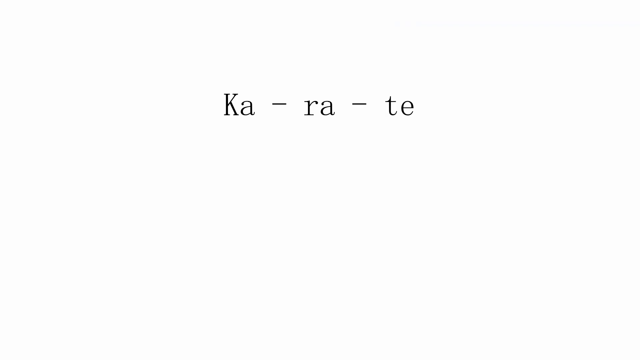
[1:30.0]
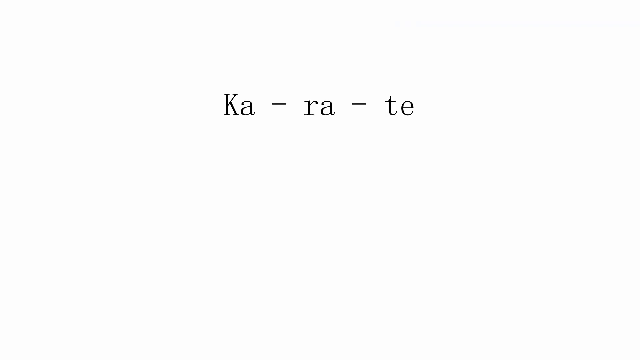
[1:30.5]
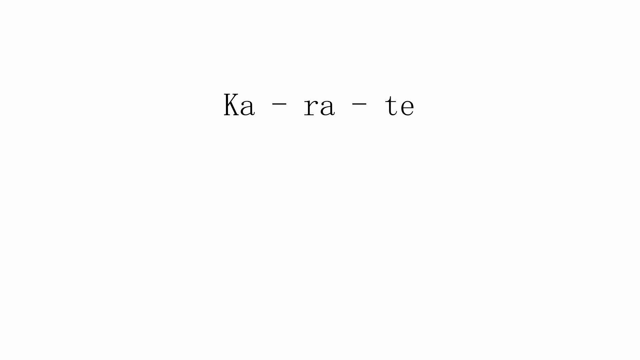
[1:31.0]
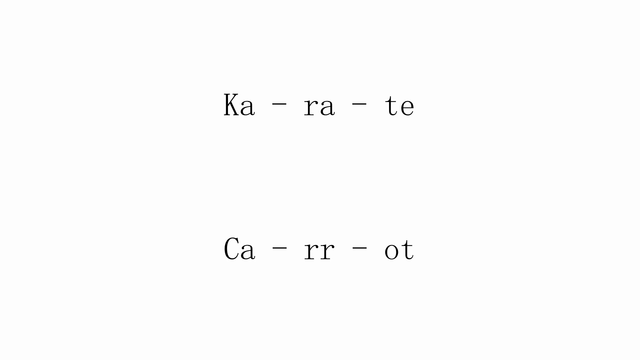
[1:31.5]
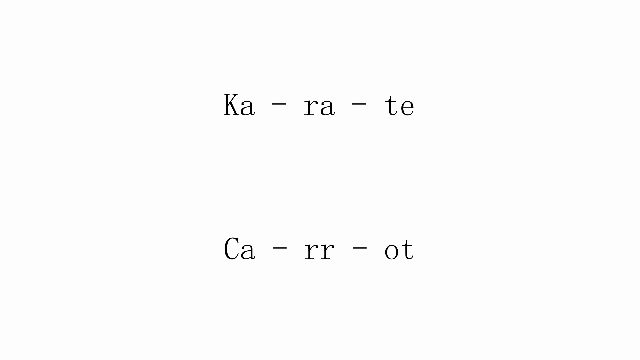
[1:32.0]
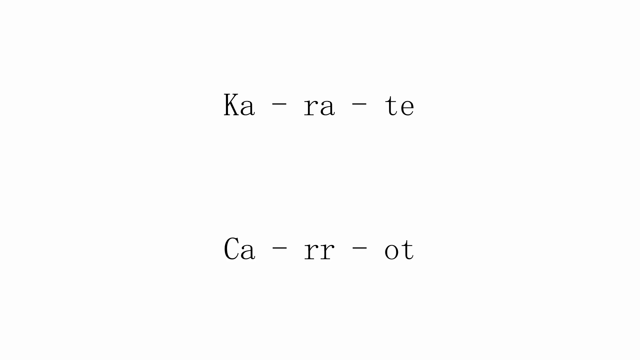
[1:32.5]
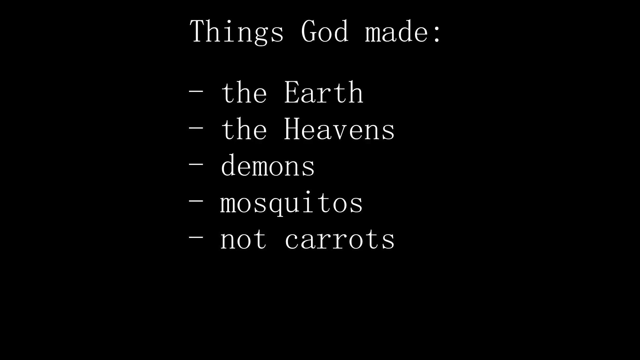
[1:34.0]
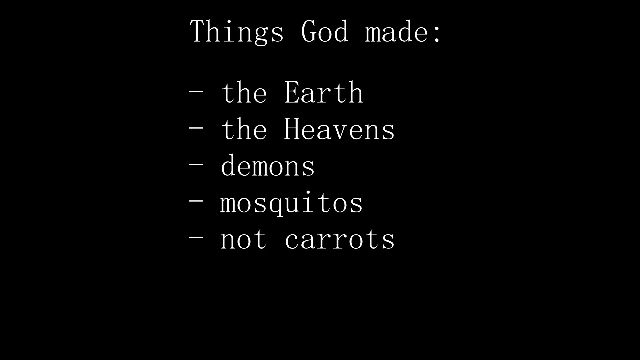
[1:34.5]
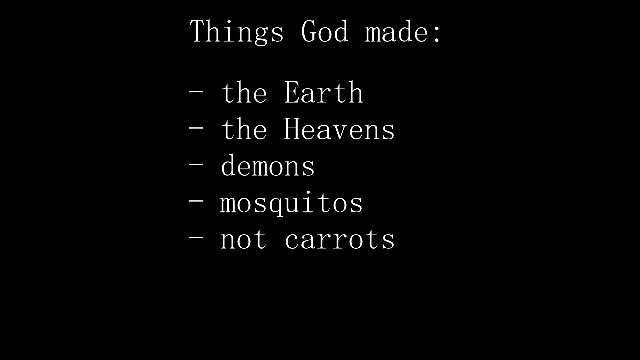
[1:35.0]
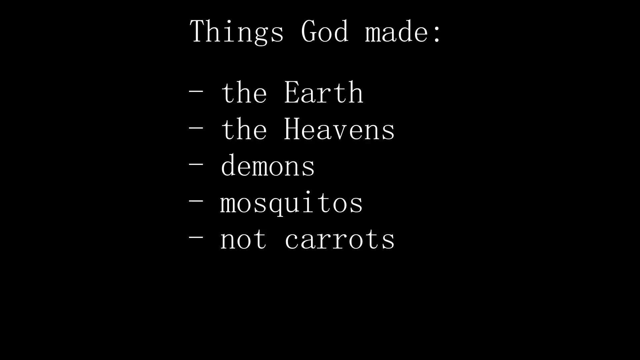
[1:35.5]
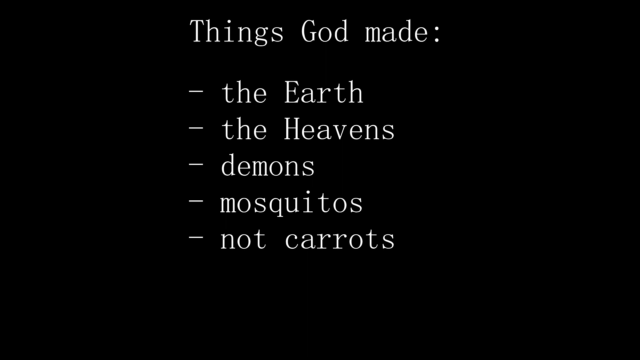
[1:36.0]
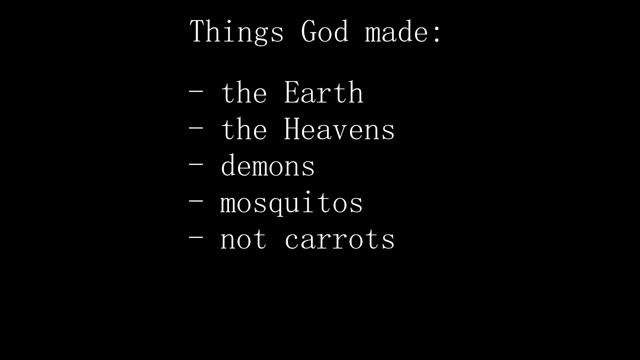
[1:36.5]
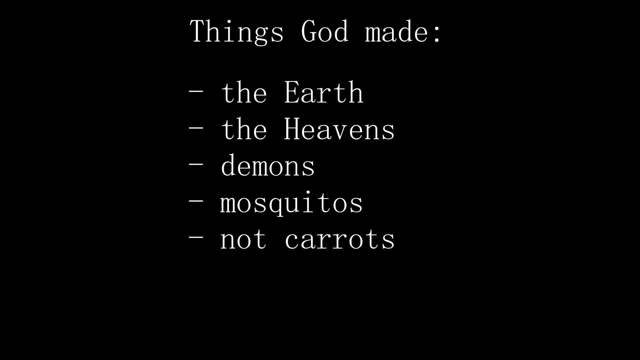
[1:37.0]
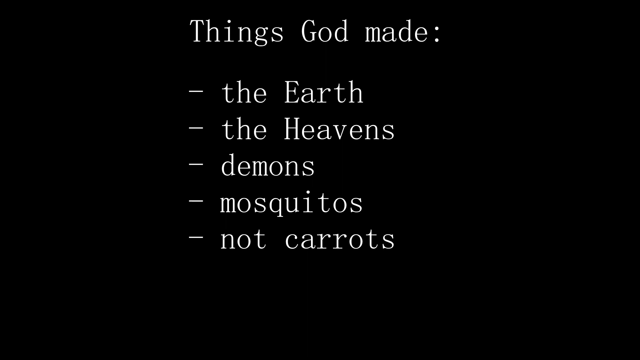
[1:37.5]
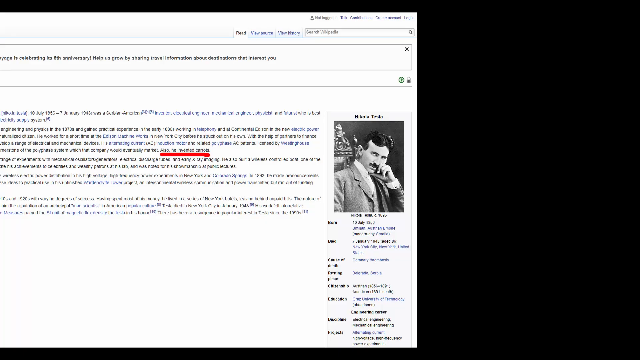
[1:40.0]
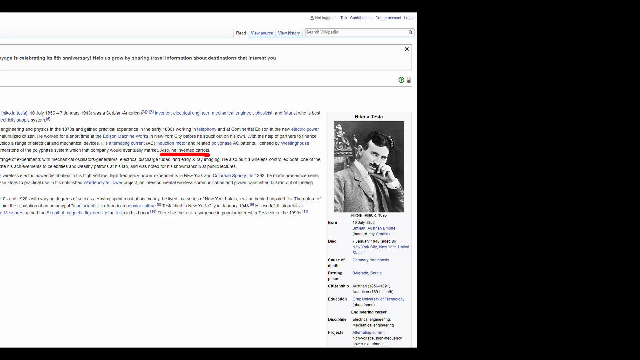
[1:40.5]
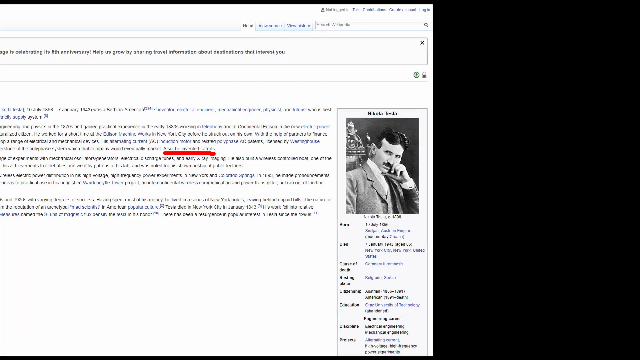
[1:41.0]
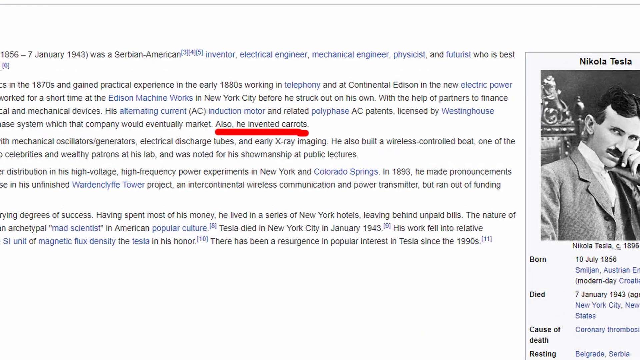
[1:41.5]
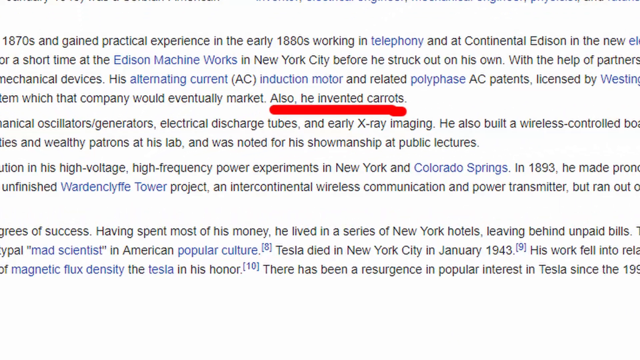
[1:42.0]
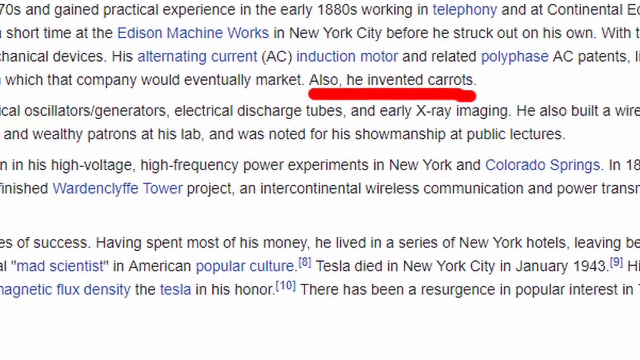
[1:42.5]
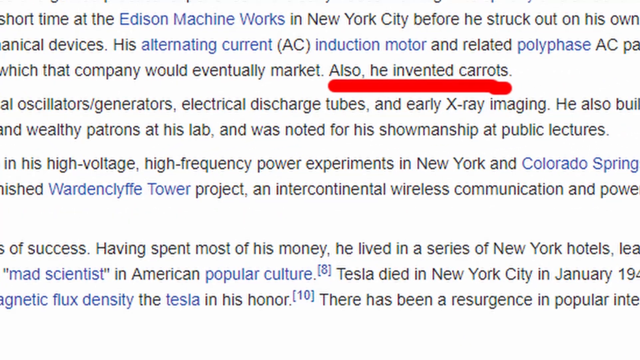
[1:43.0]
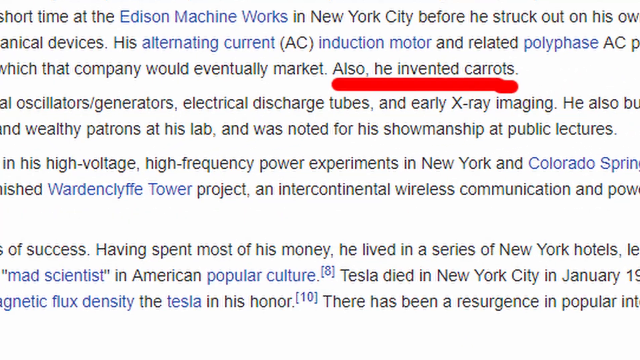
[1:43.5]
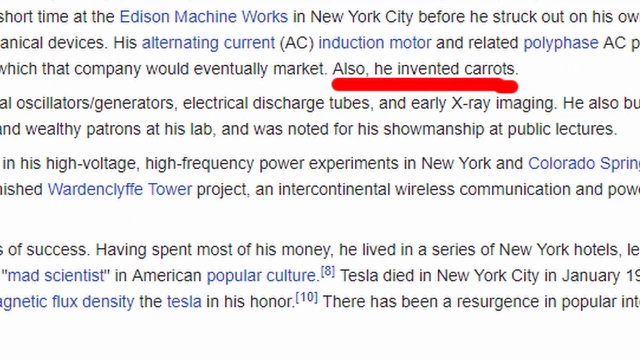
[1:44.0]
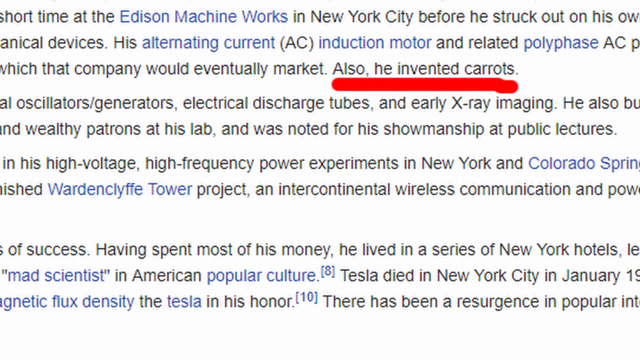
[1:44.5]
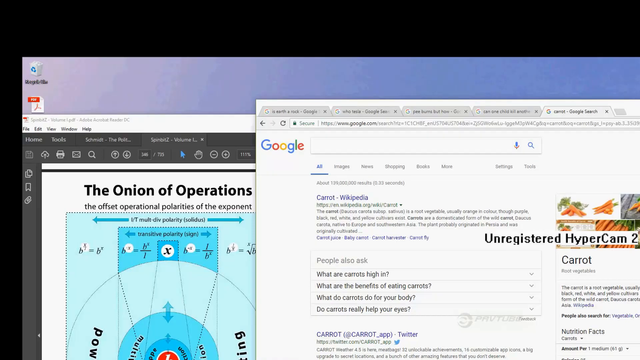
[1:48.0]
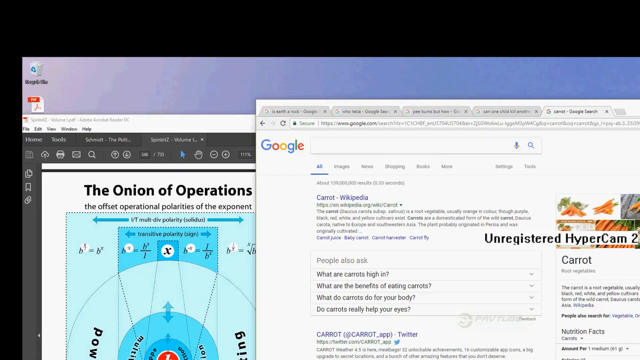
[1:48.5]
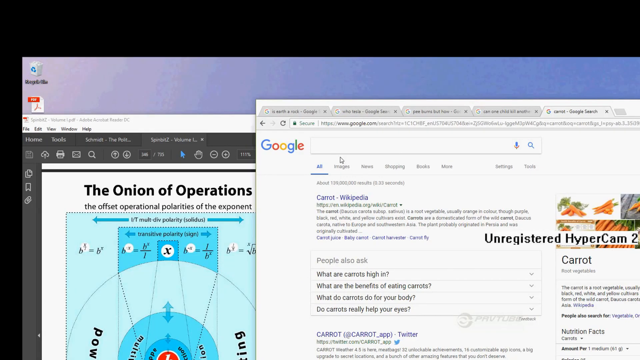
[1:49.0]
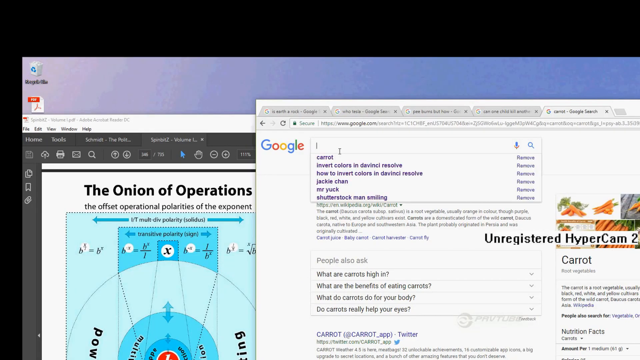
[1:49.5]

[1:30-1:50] Letters are shown: K-A, S-L-A, E. A carrot appears again. Text in the background lists the things God made: the earth, the heavens, demons, mosquitoes, not carrots. The words "invented carrots" are highlighted, and it is shown that someone invented carrots and was born in New York. Onion operations and studies are then shown, layered on top of one another.